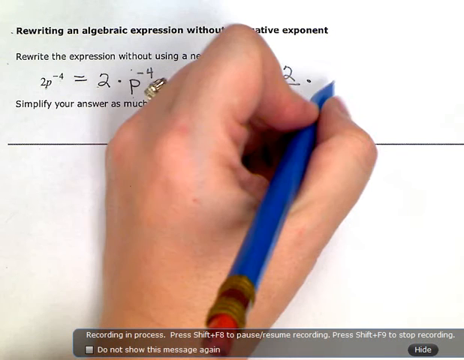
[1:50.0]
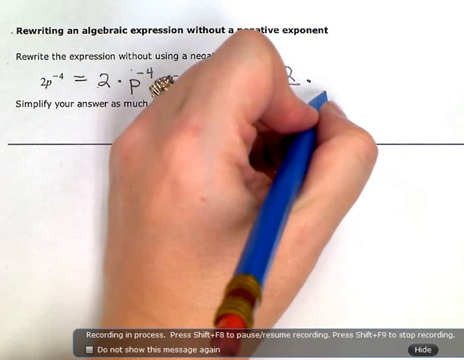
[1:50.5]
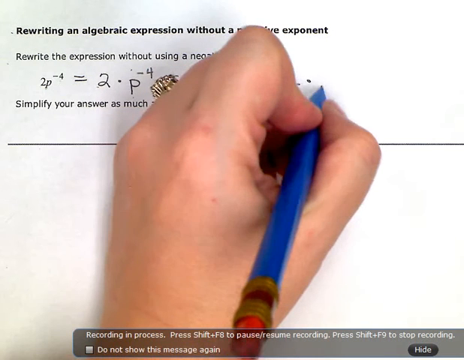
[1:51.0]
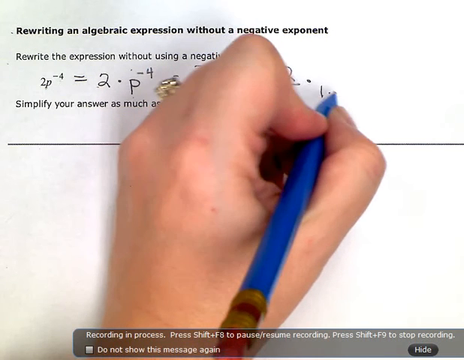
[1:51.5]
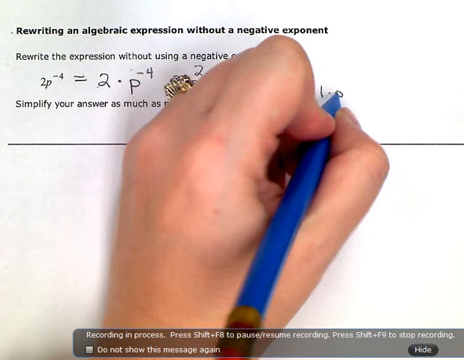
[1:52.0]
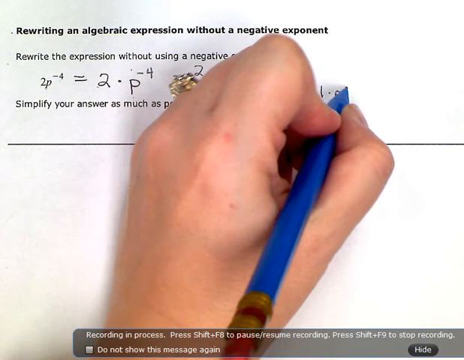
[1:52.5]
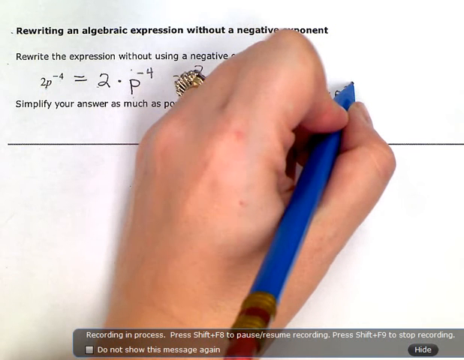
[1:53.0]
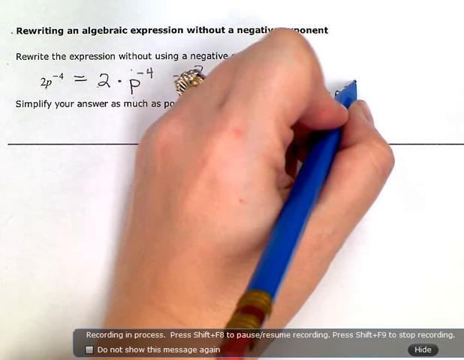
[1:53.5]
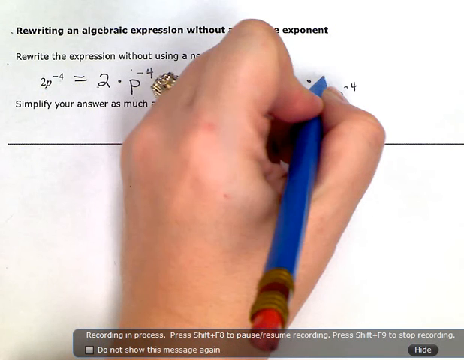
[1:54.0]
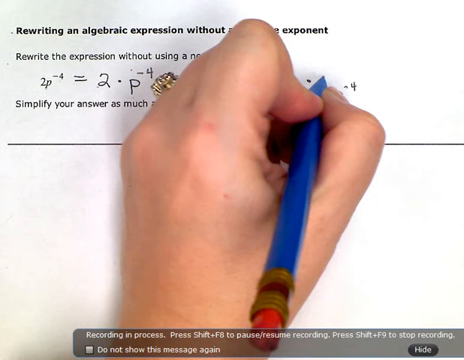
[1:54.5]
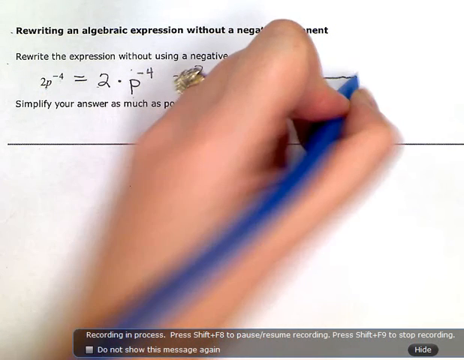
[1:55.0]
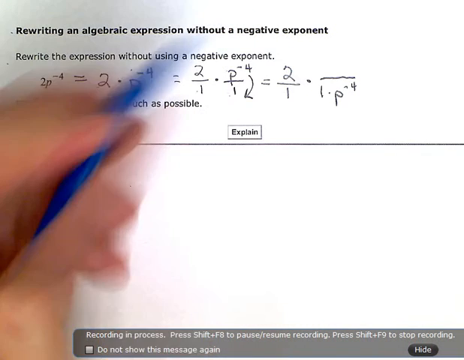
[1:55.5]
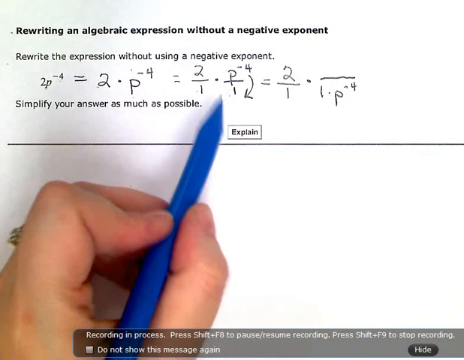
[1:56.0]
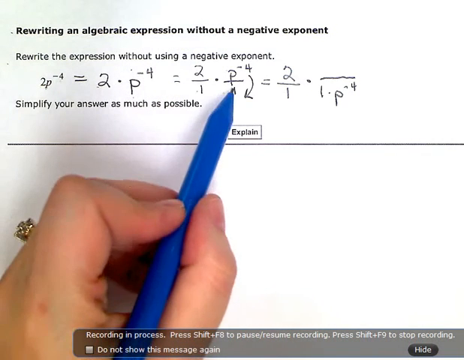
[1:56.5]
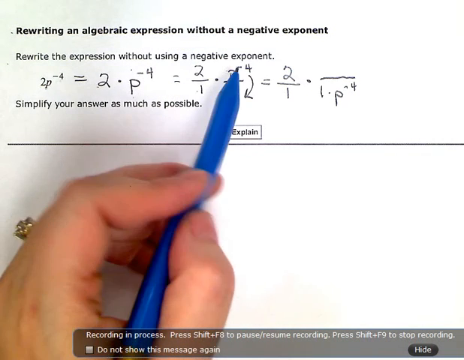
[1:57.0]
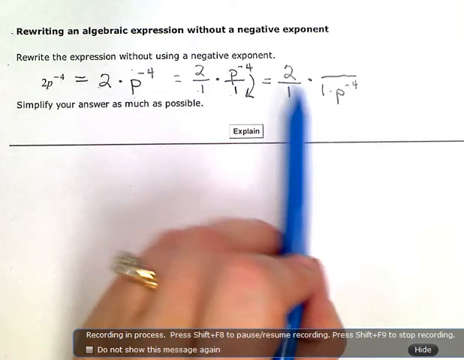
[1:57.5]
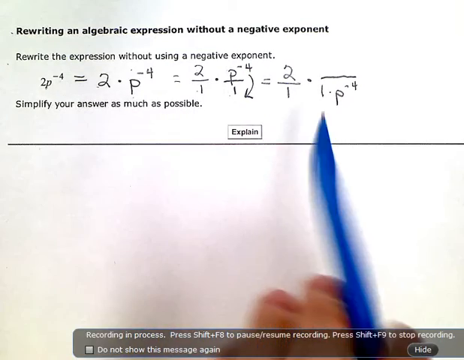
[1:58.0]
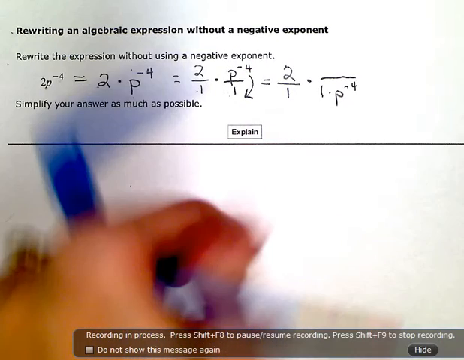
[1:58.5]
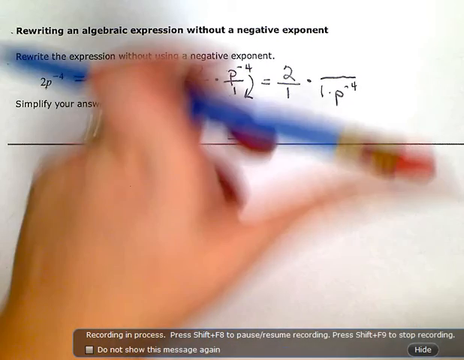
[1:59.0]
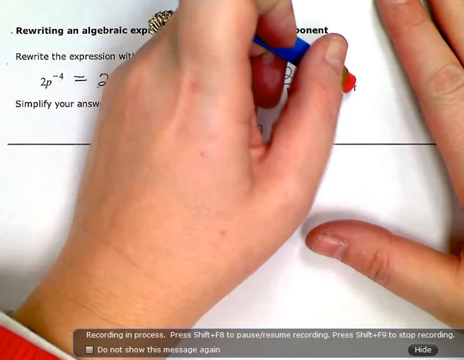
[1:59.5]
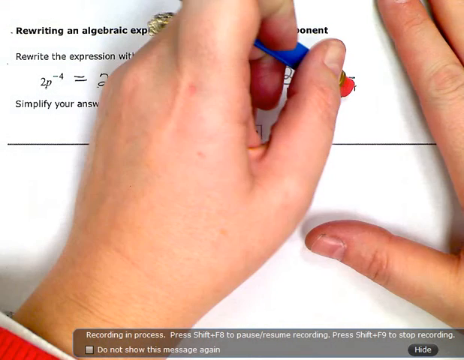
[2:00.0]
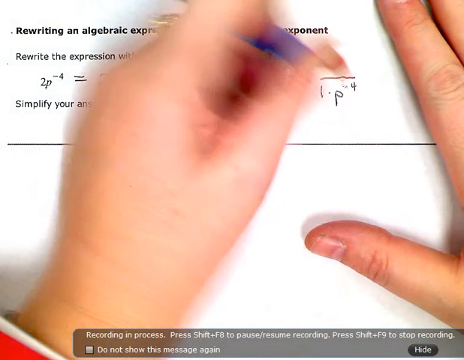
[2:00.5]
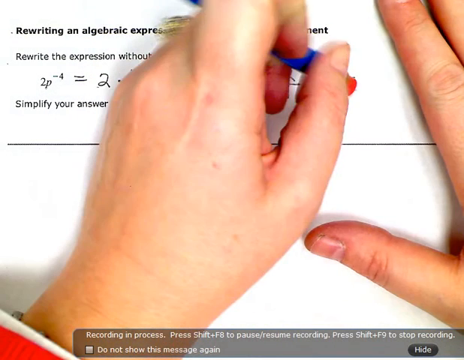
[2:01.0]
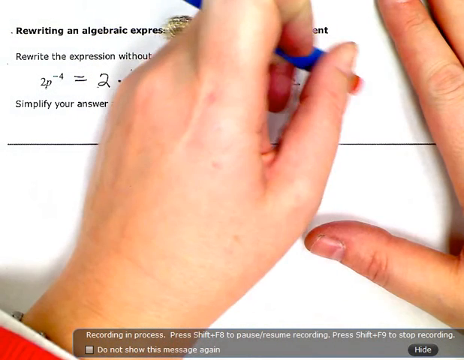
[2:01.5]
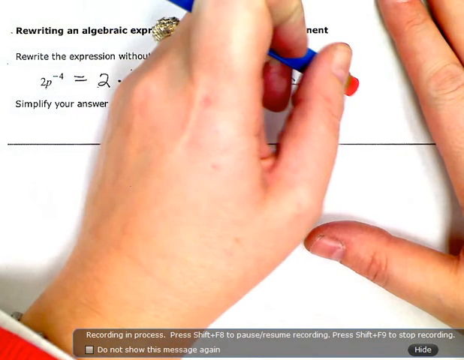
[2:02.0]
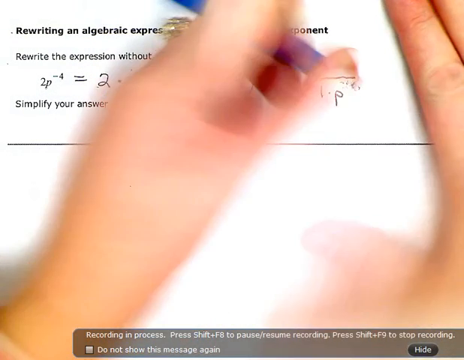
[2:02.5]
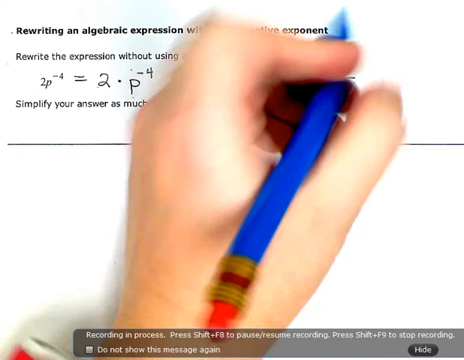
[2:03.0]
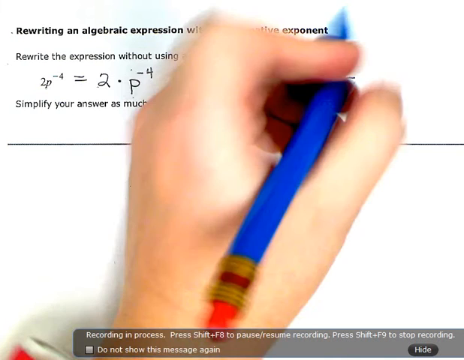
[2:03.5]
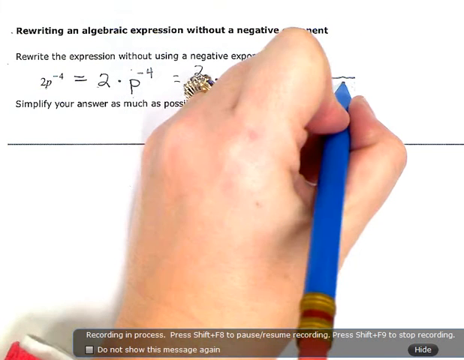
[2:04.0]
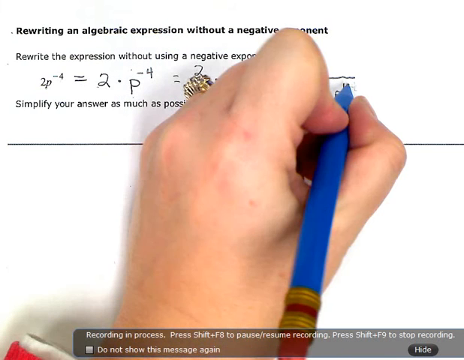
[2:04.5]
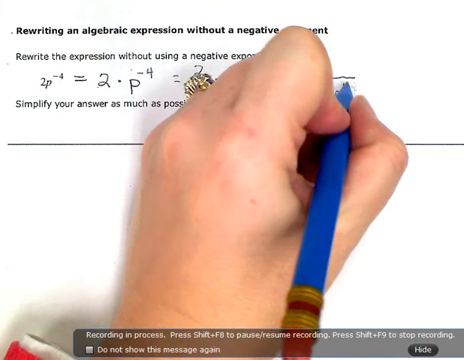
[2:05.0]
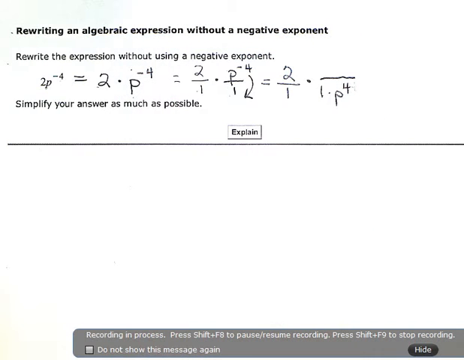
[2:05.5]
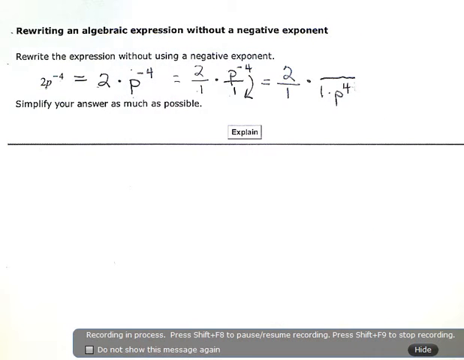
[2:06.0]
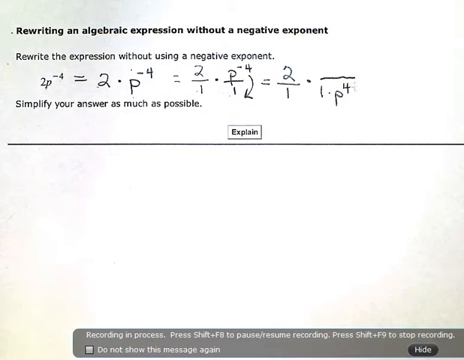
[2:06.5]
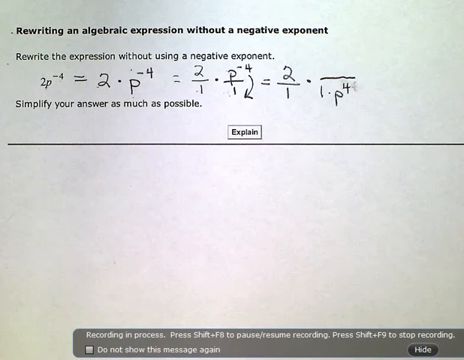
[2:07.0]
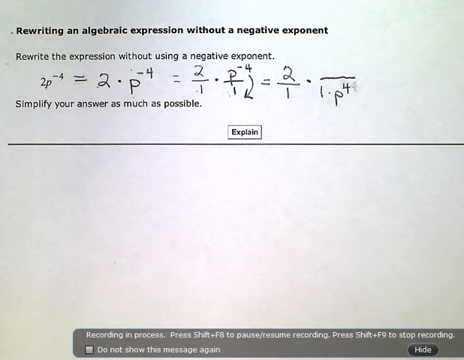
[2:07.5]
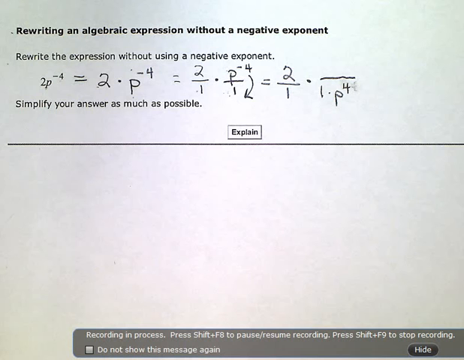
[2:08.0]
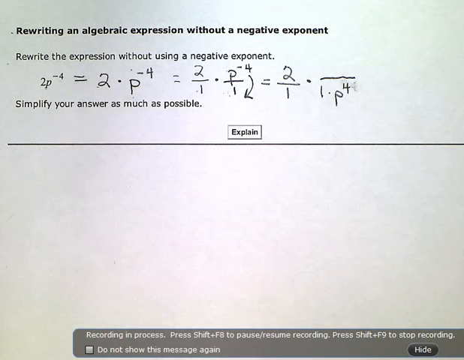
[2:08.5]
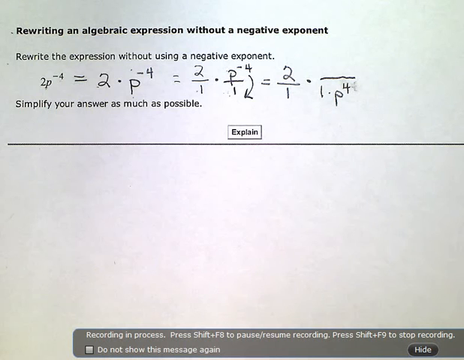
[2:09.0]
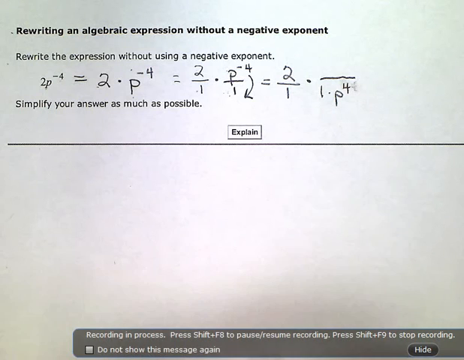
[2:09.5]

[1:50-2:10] A blurry hand and a blurry blue marker are in the center of the screen. Visible behind them are the black borders, the white page, the text at the top reading "rewriting an algebraic equation without a negative exponent," and another sentence reading "rewrite the expression without using a negative exponent." Only the beginning and end of the expression can be seen: on the left, 2p; on the right, p over 1 to the negative 4th with a line pointing down to the 1, then an equal sign with 2 over 1 and a multiplication symbol. Moving the pen slowly at first, he writes the rest of the equation: 1 times p to the negative 4th on the bottom, with a line above it. He quickly moves his hand off the screen, then comes back with a pen or pencil, erases the negative 4 and changes it to a positive 4.